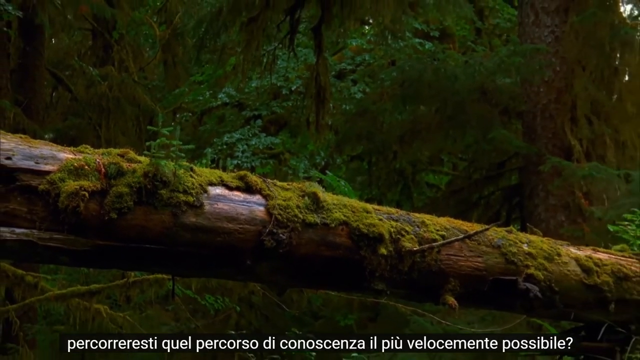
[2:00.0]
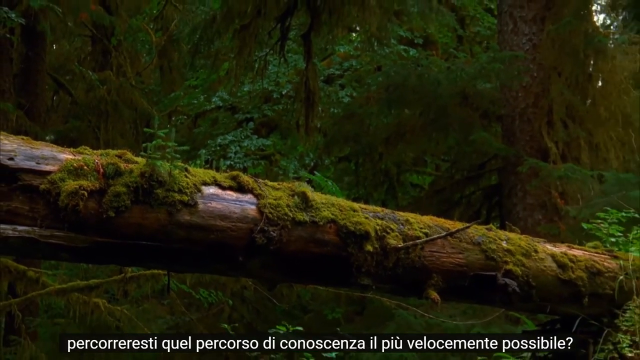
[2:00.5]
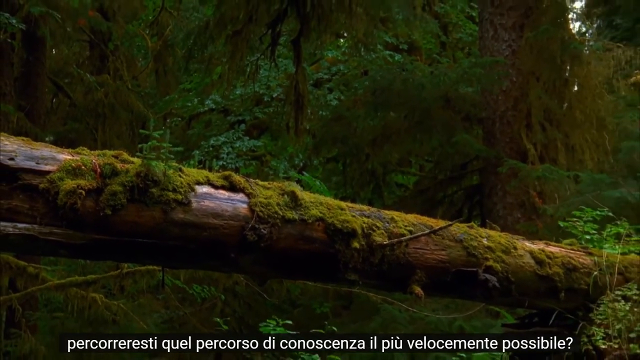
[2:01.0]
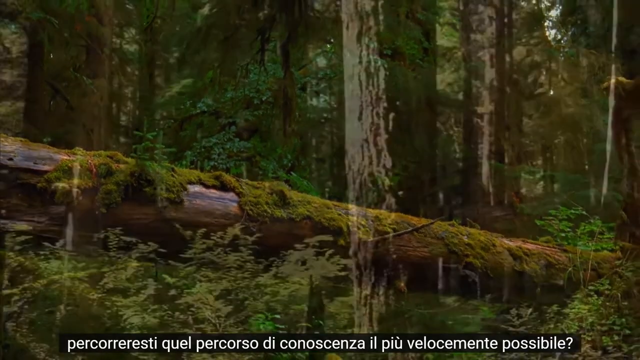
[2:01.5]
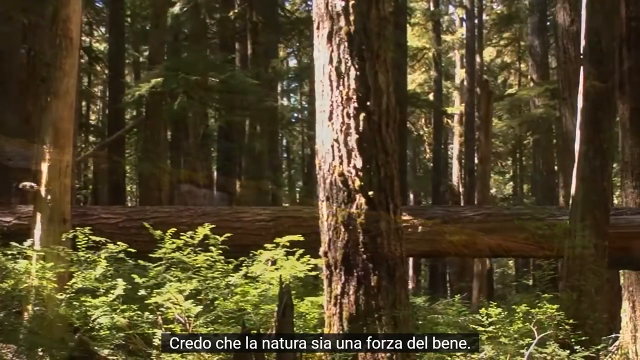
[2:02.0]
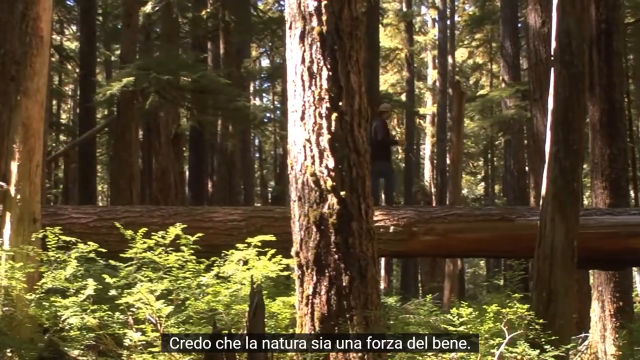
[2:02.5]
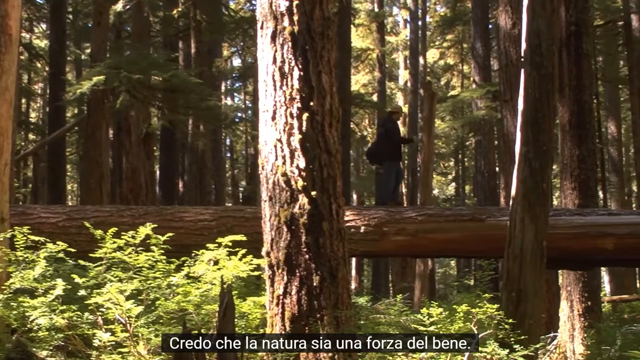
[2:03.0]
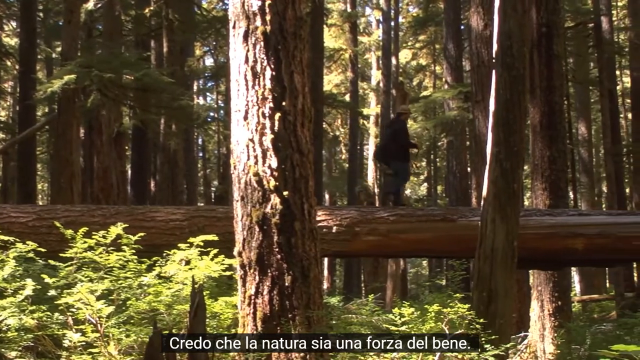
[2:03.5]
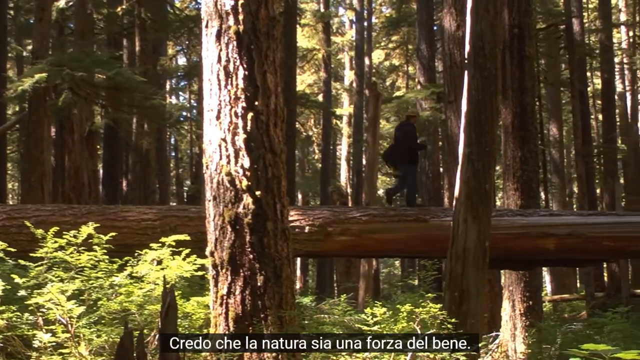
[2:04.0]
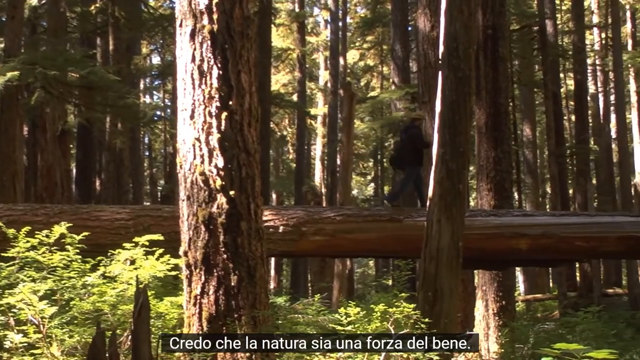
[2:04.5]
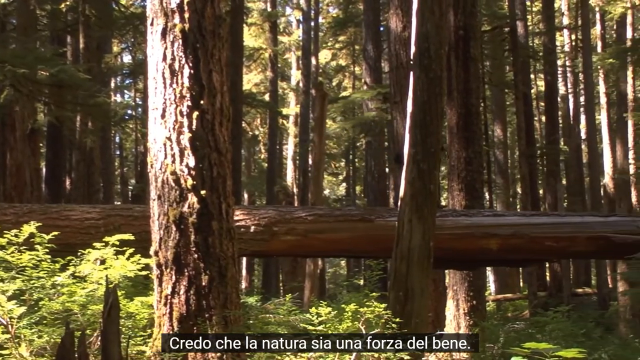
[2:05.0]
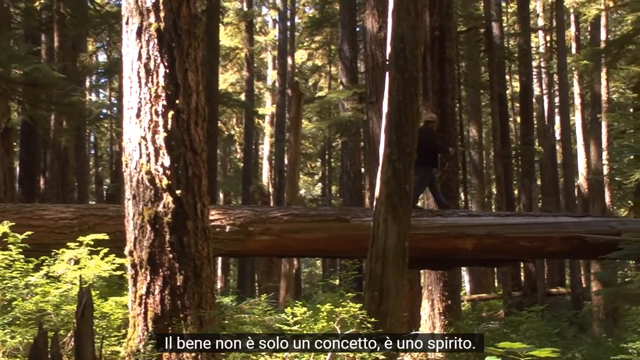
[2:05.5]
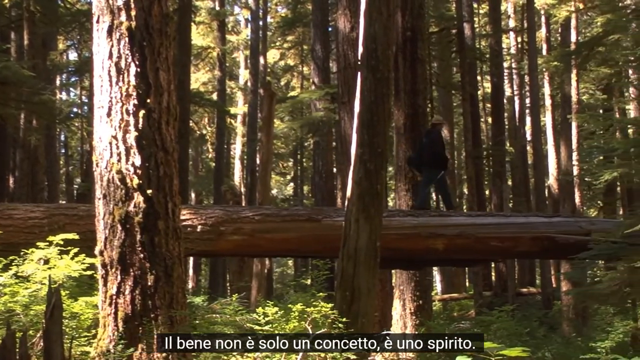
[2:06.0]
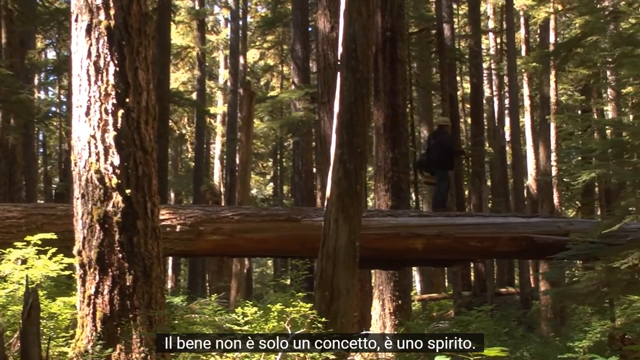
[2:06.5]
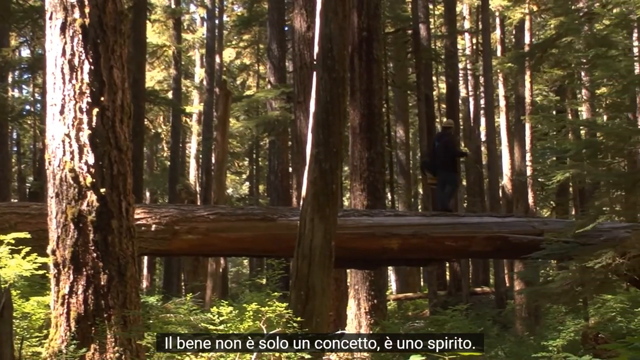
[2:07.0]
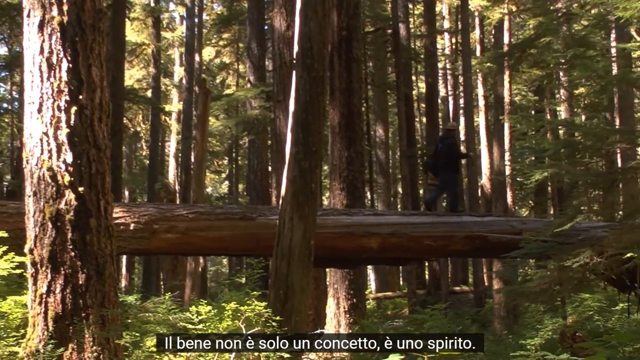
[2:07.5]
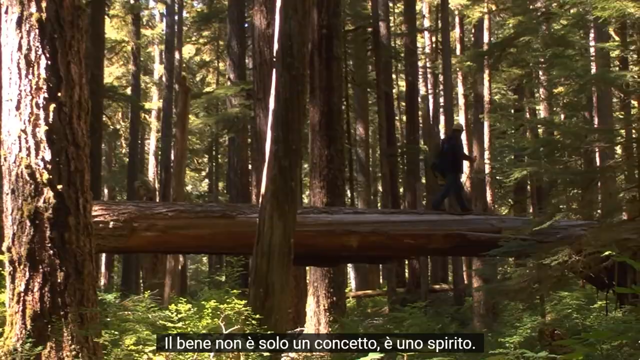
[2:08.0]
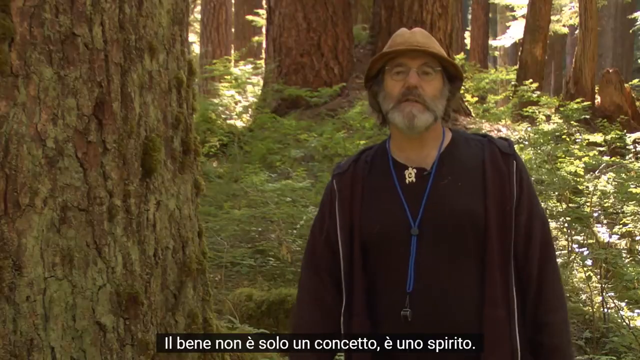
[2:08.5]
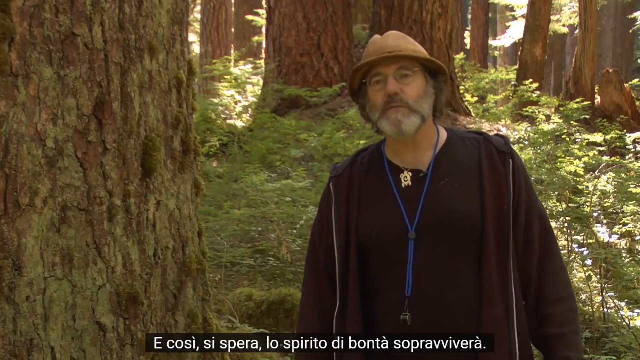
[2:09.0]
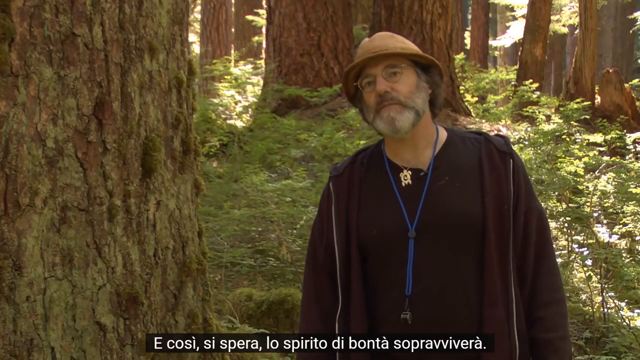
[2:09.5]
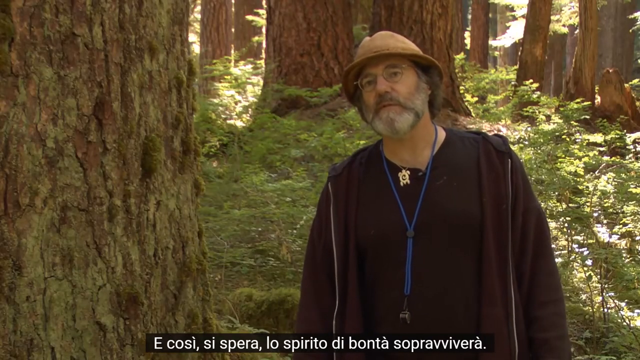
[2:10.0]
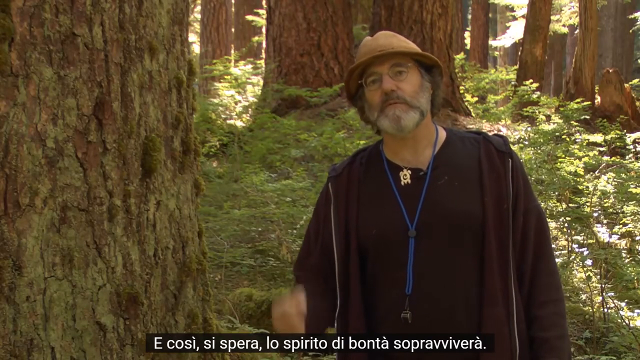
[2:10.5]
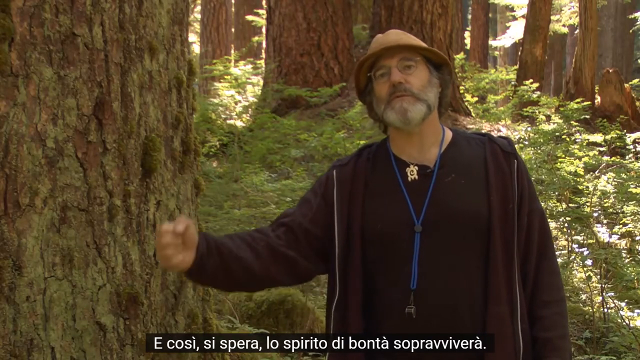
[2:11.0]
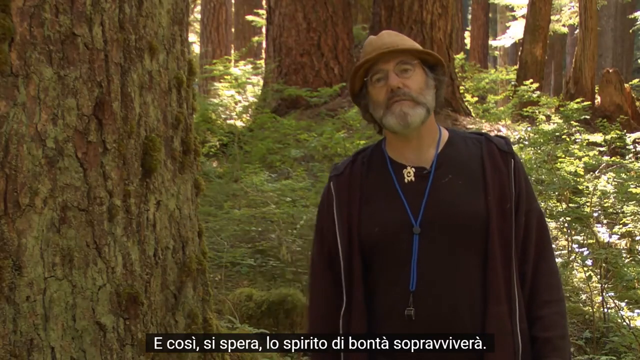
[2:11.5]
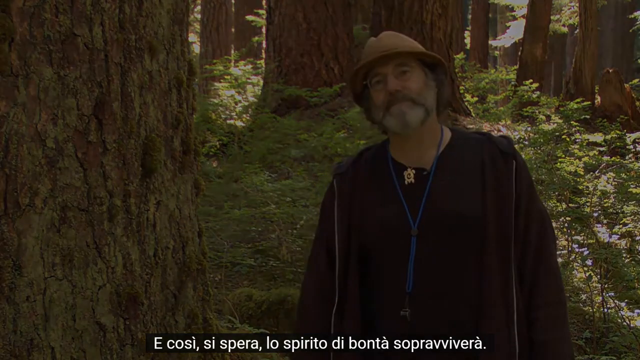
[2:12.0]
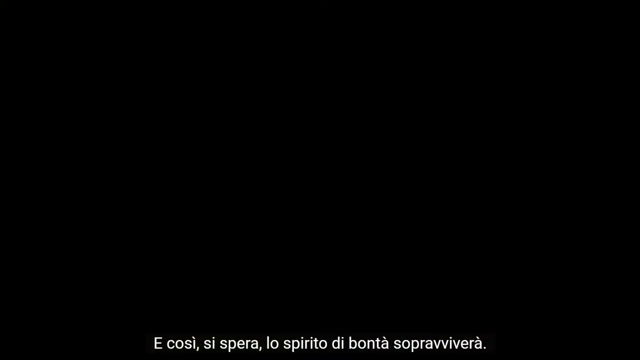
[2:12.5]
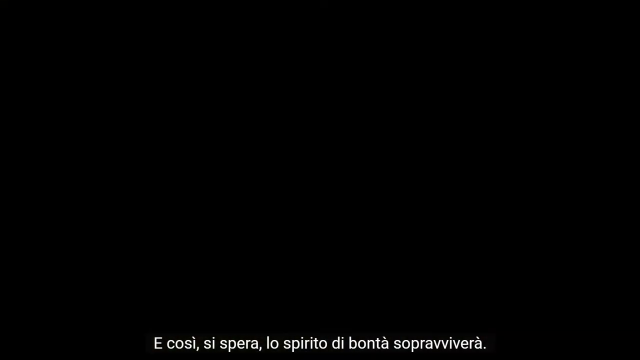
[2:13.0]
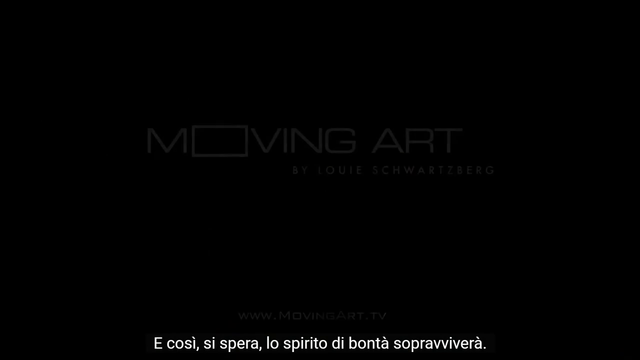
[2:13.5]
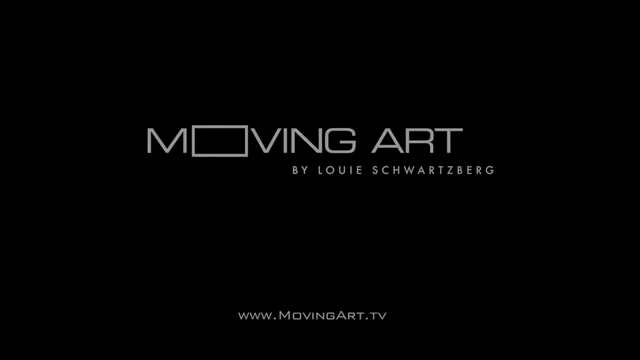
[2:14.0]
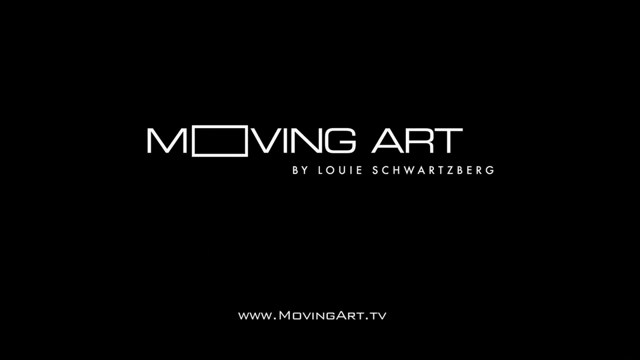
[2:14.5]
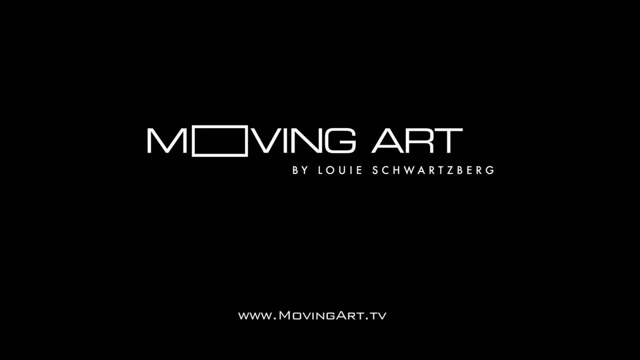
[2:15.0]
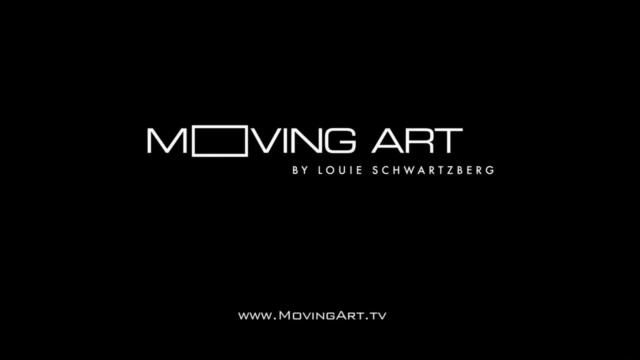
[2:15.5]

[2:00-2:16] The zoomed-out fallen tree trunk runs from centre-left to bottom-right of the screen. It is brownish-grey, with moss covering 60-70% of the top and extending down in patches to just below halfway, and patches with no moss on the left, centre-left and centre-right. Behind it are much smaller trunks of living trees and green foliage, but the forest floor is not visible. The video then shows Paul walking along a horizontal tree trunk about a third of the way up the frame. Two large tree trunks and some foliage are in the foreground, and the trunk he walks on is in mid-air, supported somehow, with lots of tree trunks clearly visible behind, more trunks than space between them, in a very dense forest. Paul is in the centre between the two foreground trunks, about a quarter of the height of the video, framed by them as he walks along the elevated trunk. The forest floor is difficult to see, but the trunk seems to be approximately Paul's height above it, maybe six feet. The video returns to the tree trunk Paul was leaning on earlier; this time he is standing, seen from the waist up, wearing his jacket, with a hat, glasses, beard and moustache. He faces the camera, leaning slightly to the right as he talks and gestures with his right hand. The scene fades to a black screen with white text: "MOVING ART" in large font, underneath it "BY LOUIE SCHWARTZBURG" offset slightly to the right, and at the bottom "www.movingart.tv". The O in MOVING is a rectangle, like a letter O on its side, perhaps twice as big as a normal letter O would be.